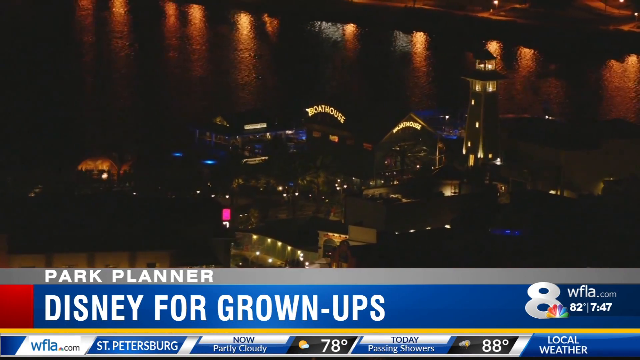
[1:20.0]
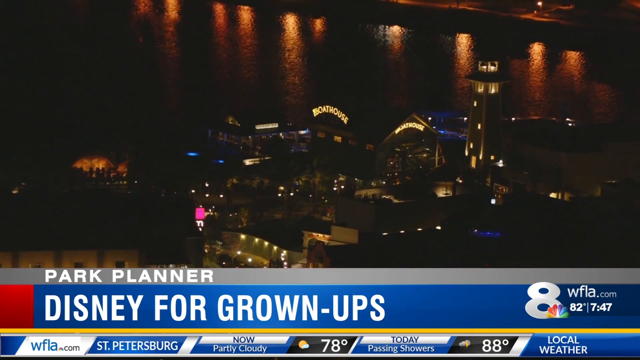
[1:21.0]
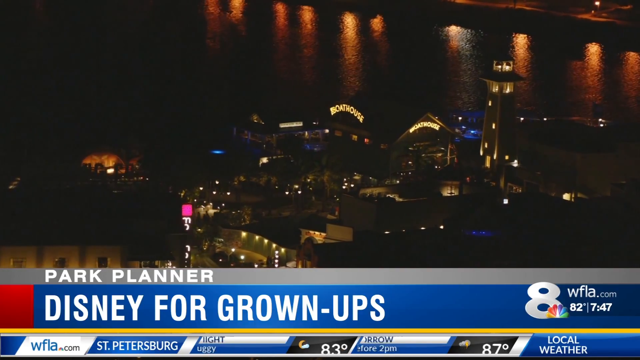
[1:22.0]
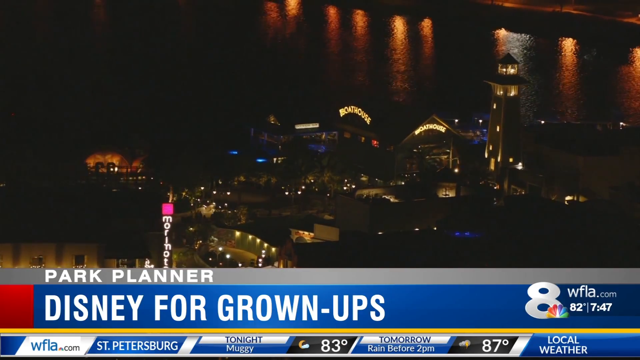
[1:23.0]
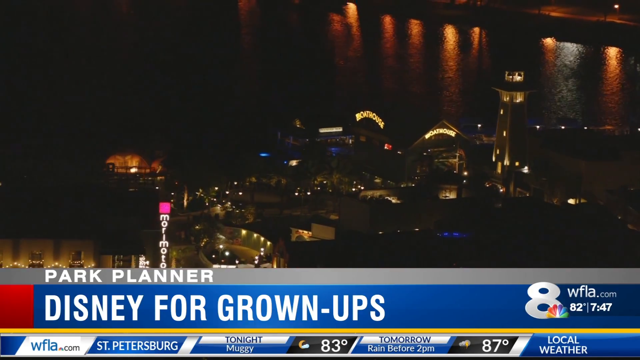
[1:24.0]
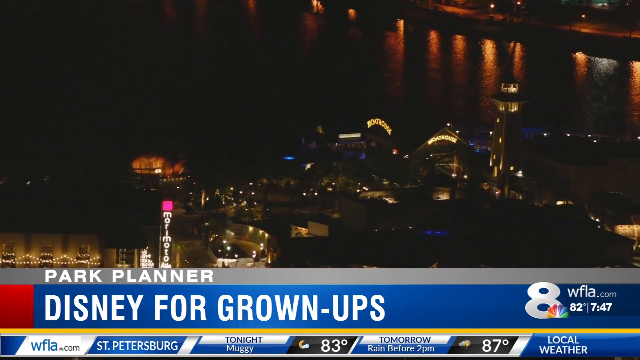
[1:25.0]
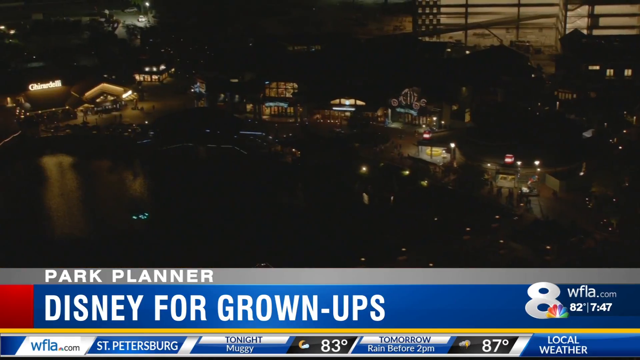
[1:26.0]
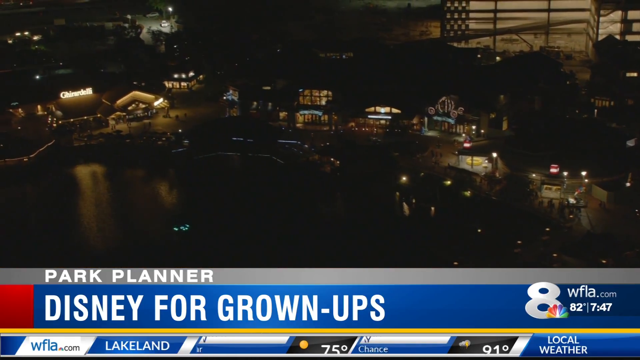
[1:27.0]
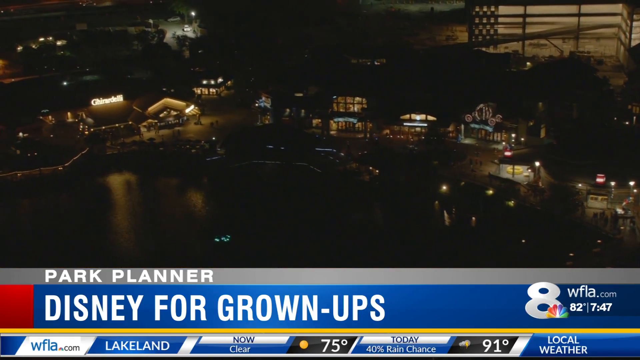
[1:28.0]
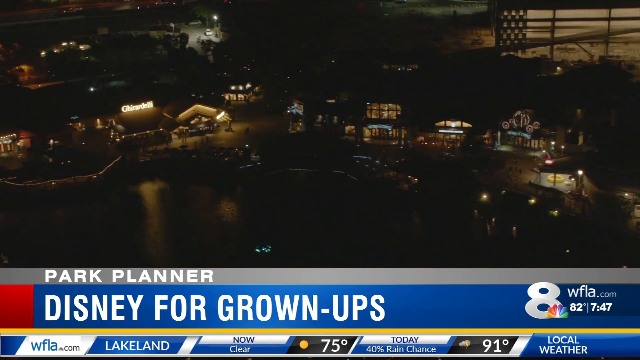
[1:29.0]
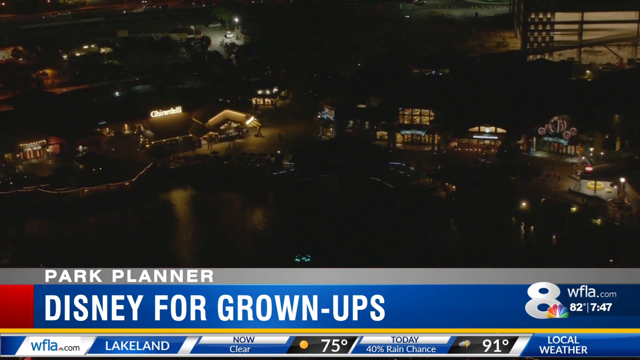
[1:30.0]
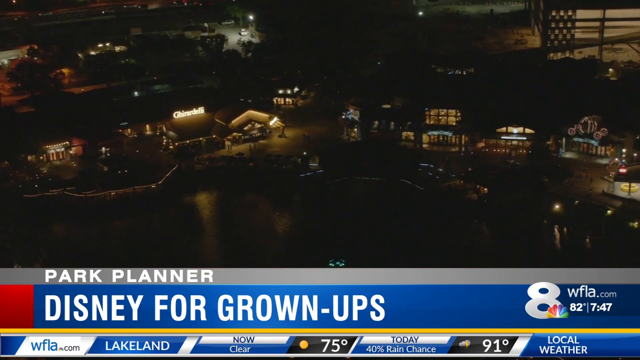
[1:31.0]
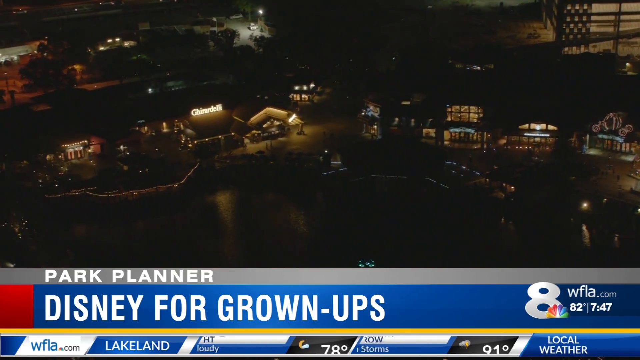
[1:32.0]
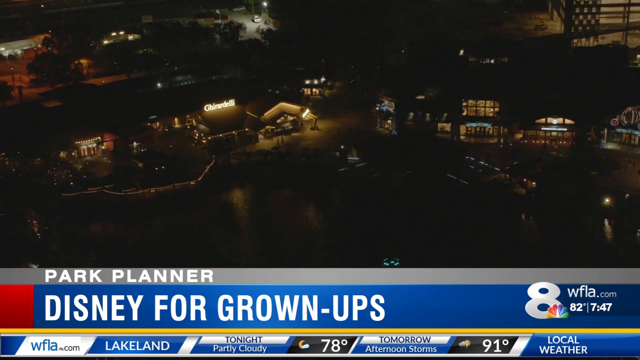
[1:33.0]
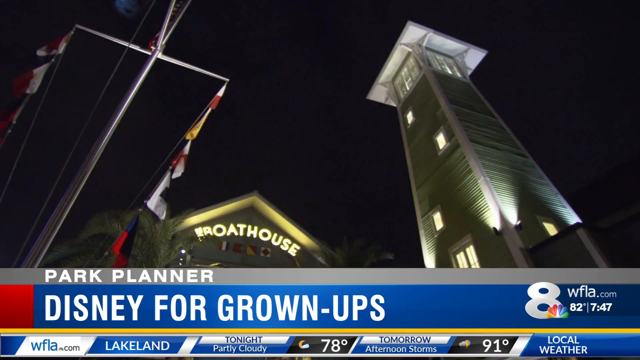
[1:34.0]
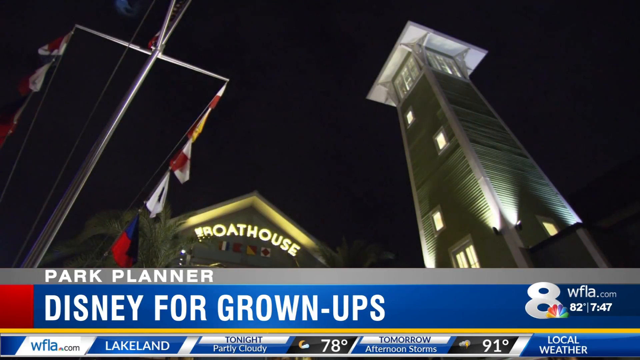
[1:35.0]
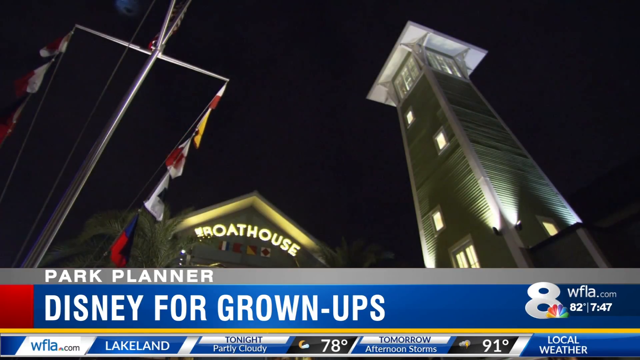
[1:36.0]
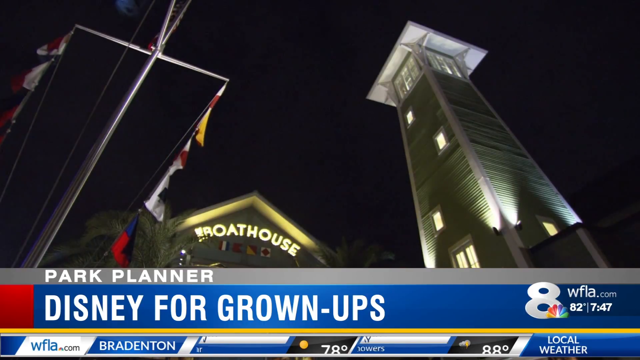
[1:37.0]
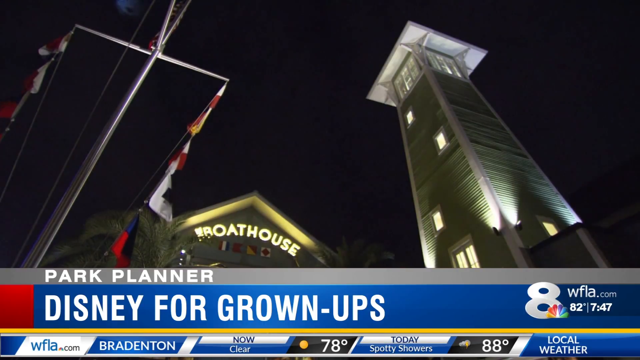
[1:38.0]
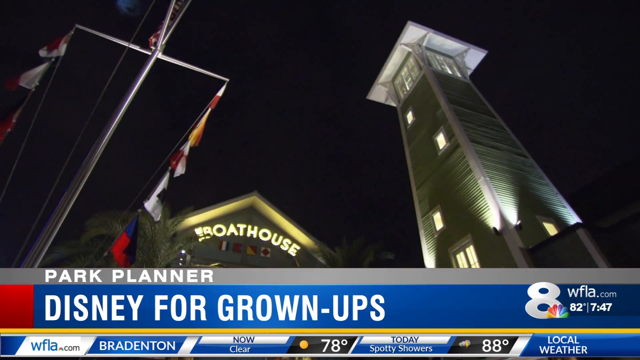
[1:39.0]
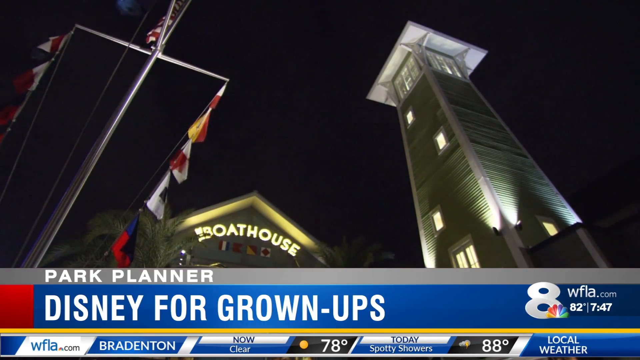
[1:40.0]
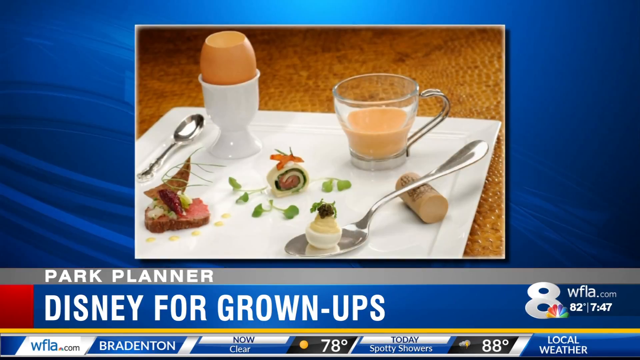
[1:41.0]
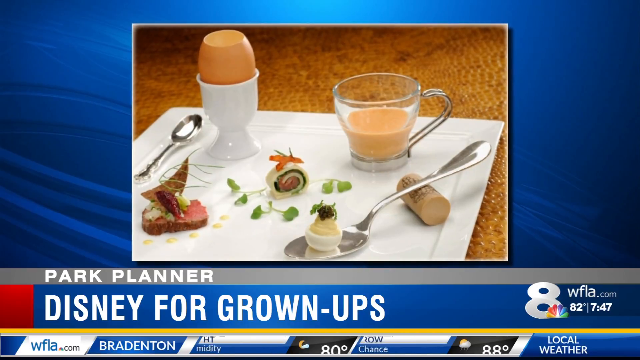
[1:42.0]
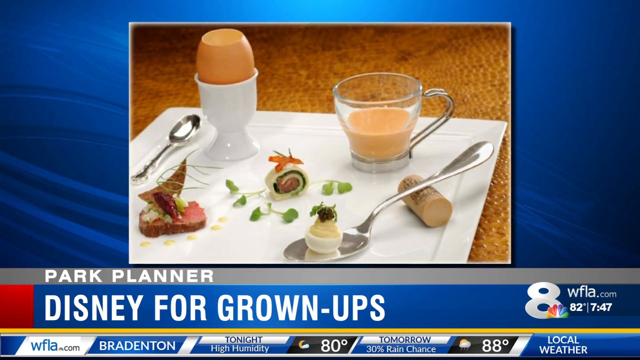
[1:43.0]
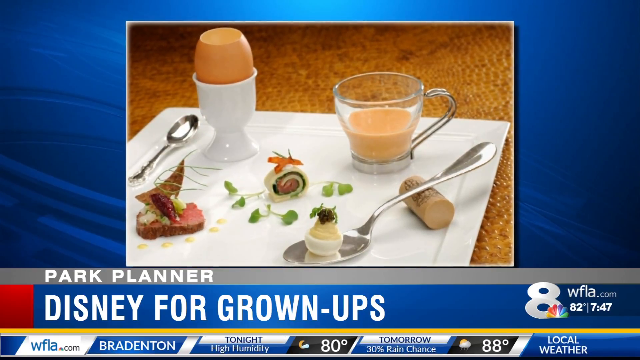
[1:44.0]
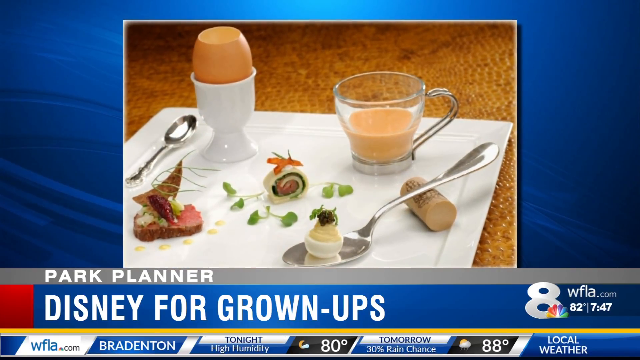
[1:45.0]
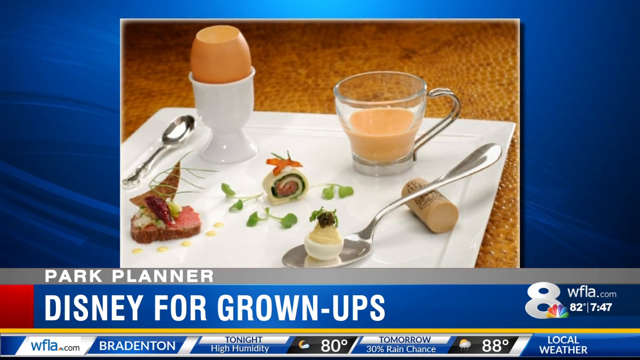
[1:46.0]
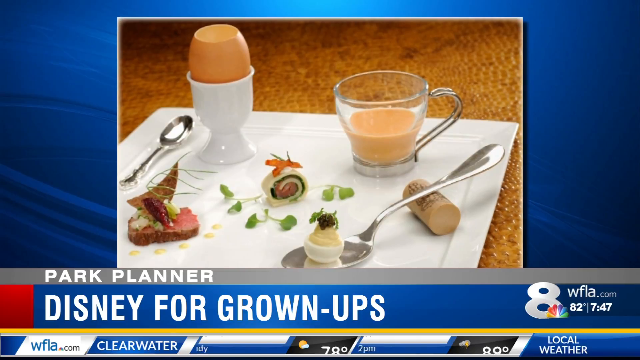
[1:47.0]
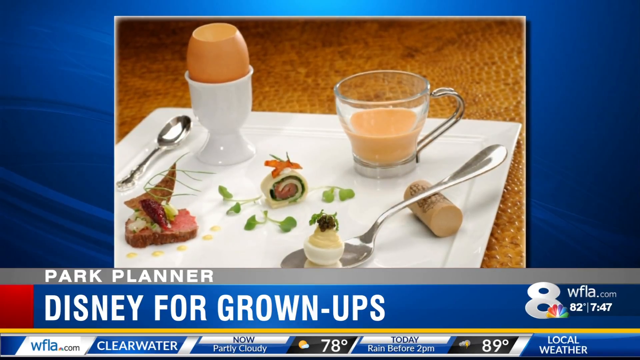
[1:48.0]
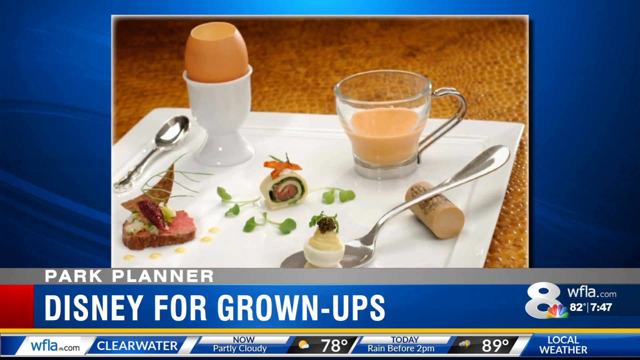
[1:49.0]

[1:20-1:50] A wide panoramic shot, likely taken by a drone, shows the amusement park's boathouse covered in lights, with the text "boathouse" in goldish lights. Behind the boathouse is water with other lights reflecting on it, and the view is taken around the boathouse. A building in the lower left corner appears to be named "morimoto". The camera pans to another scene of a variety of buildings on the water; on the left side is a building that says "ghirardelli", with the water in the foreground and the buildings in the background. This also appears to be a drone shot moving over the water. The news banner remains at the bottom of the screen. The next shot is still video but no longer moving: a view looking up at the boathouse, which has flags from various countries, with what appears to be some sort of lighthouse on the right side of the screen overlooking the boathouse. It is nighttime and the sky is totally dark, with no stars visible. Next is a still photograph of a meal: a glass of perhaps coffee or some sort of orange light tan beverage; a spoon resting on a wine cork with a white and yellow-looking bite on it; a sushi-roll-looking item behind that; to its left what appears to be some sort of raw beef with a decoration on top; behind that a white cup with an orange item in it; and to the left another silver spoon. The plate is white, on an orange table.